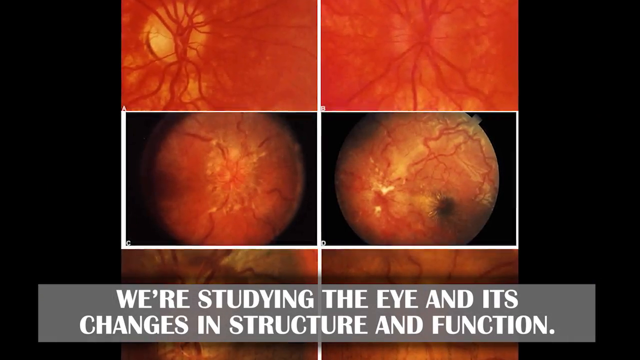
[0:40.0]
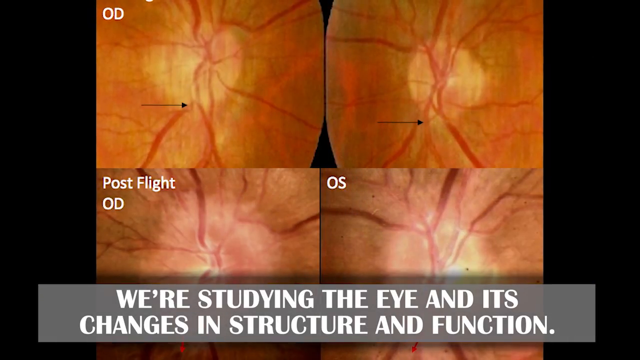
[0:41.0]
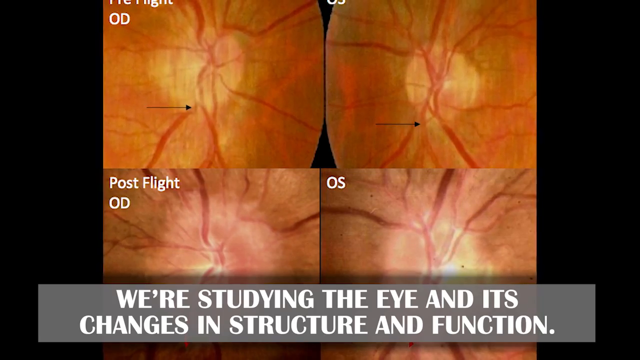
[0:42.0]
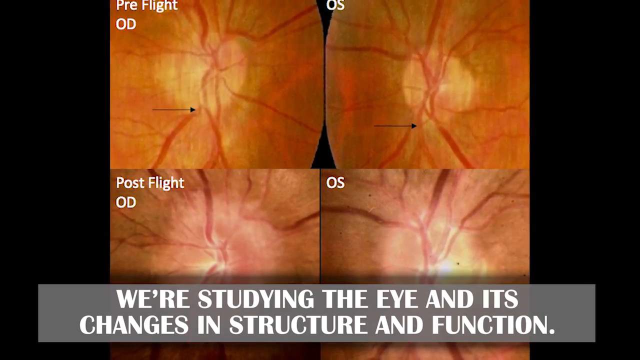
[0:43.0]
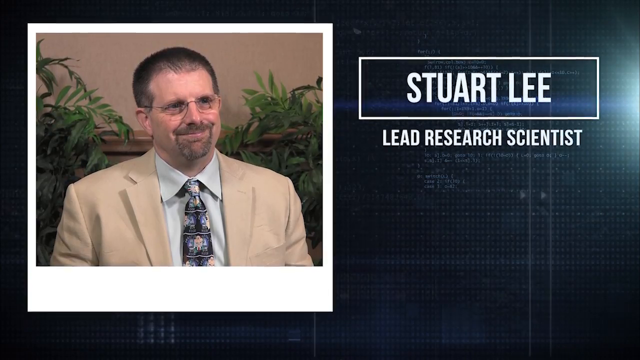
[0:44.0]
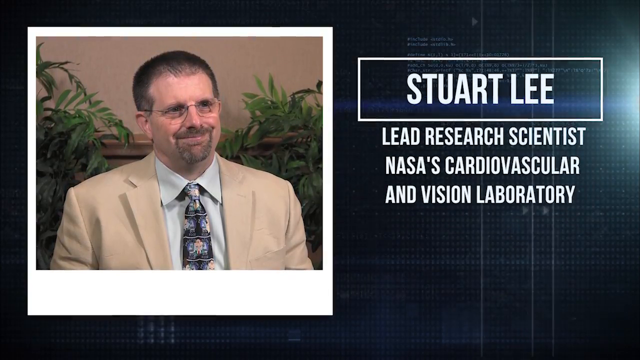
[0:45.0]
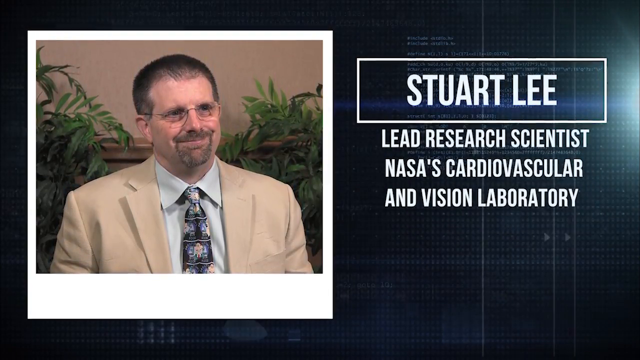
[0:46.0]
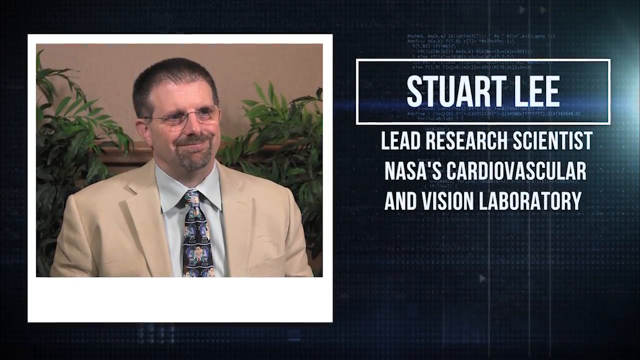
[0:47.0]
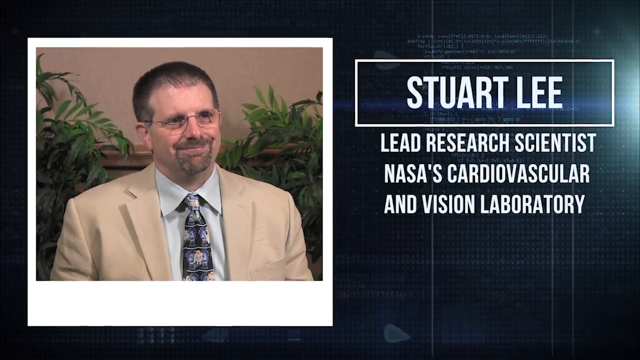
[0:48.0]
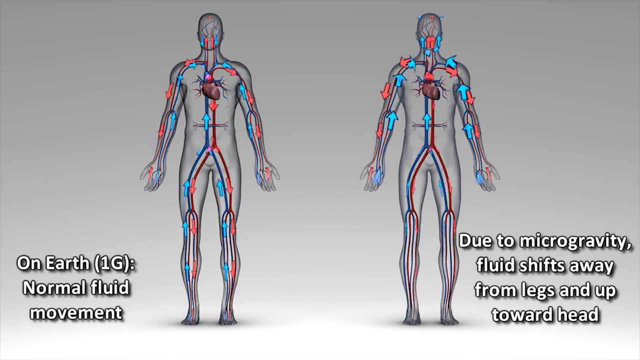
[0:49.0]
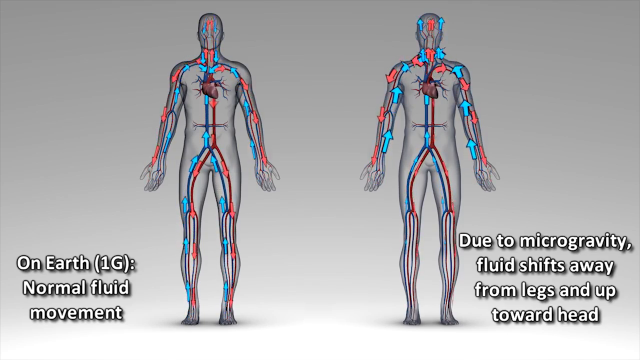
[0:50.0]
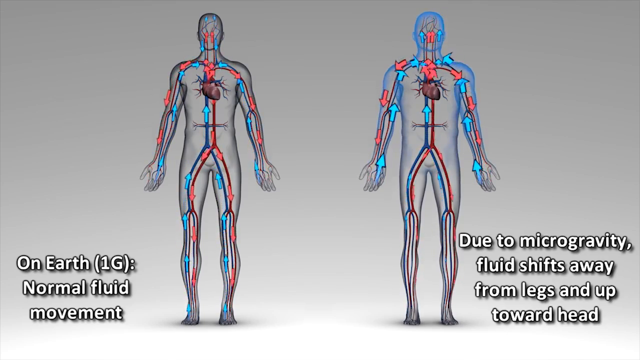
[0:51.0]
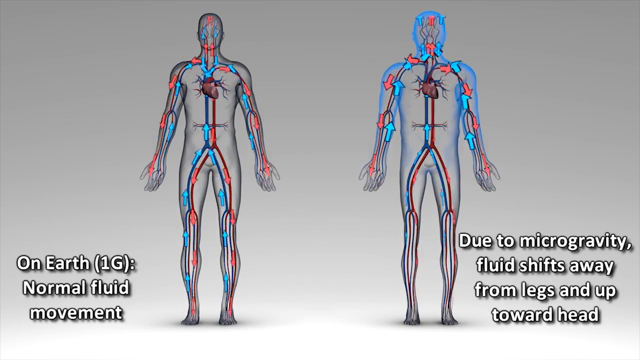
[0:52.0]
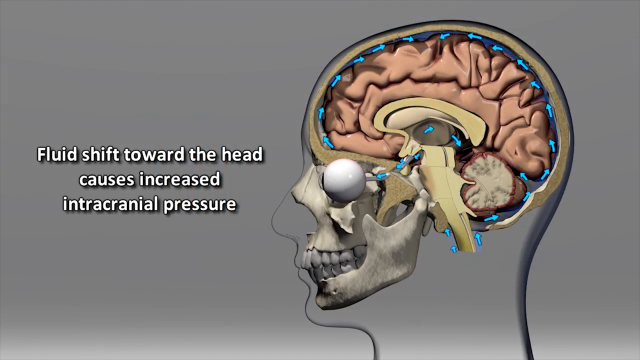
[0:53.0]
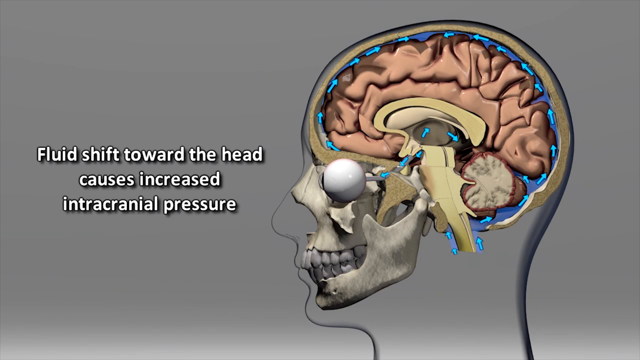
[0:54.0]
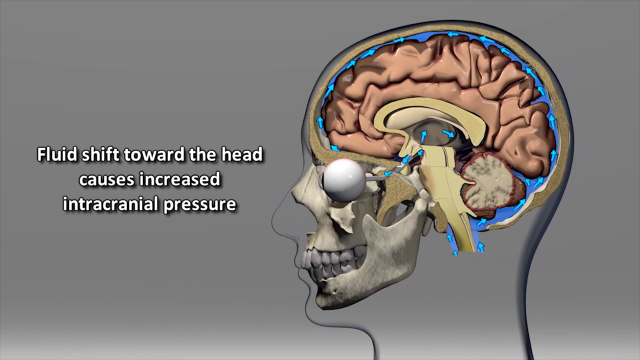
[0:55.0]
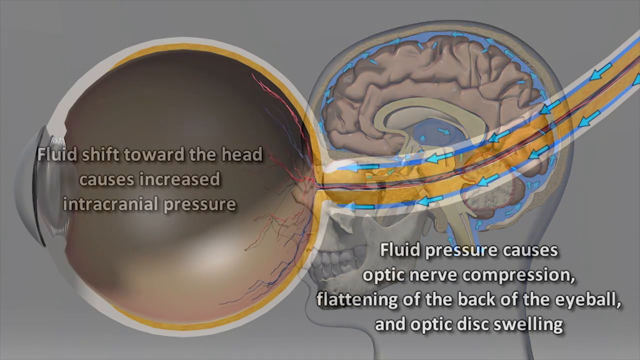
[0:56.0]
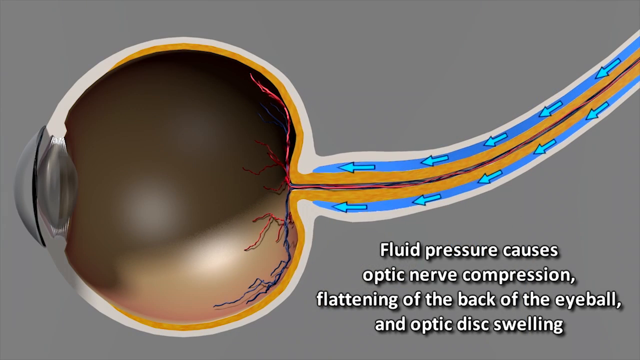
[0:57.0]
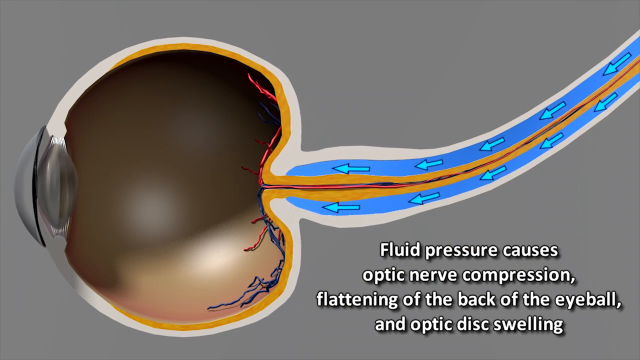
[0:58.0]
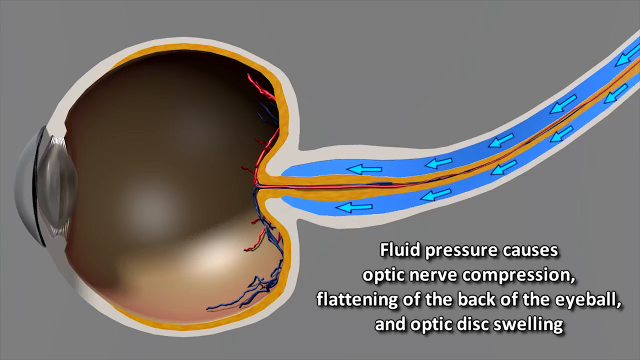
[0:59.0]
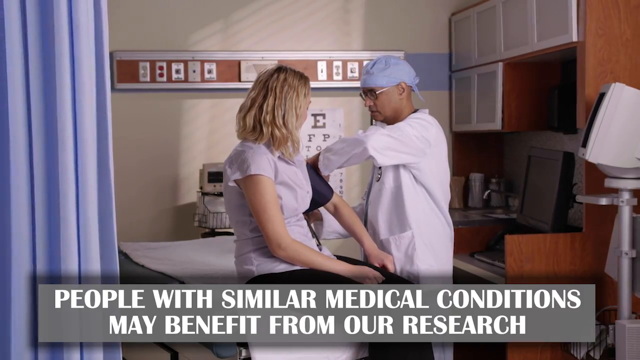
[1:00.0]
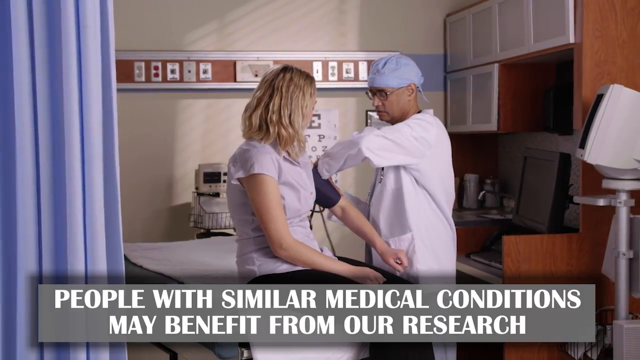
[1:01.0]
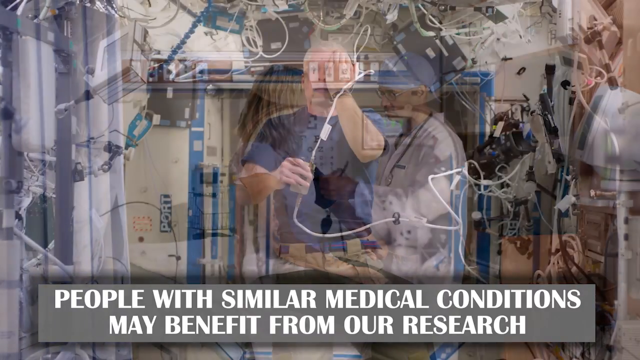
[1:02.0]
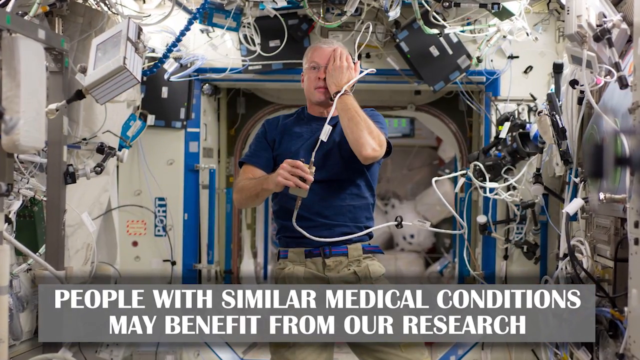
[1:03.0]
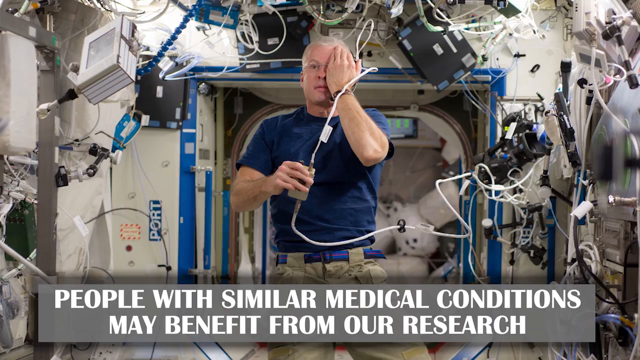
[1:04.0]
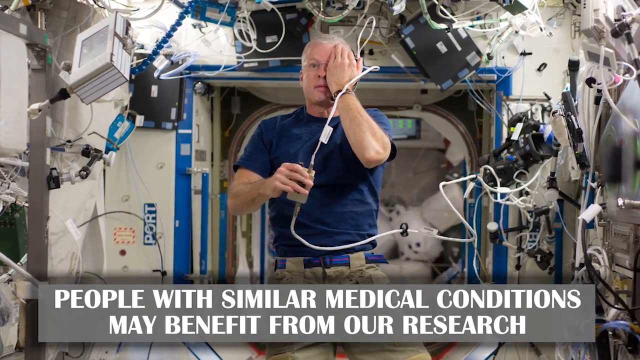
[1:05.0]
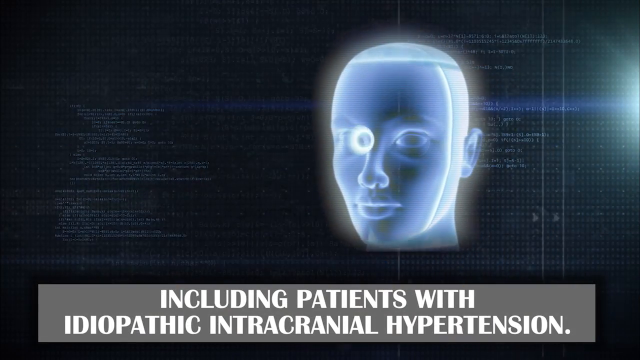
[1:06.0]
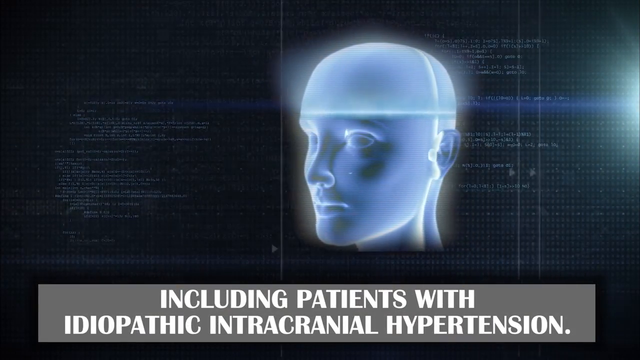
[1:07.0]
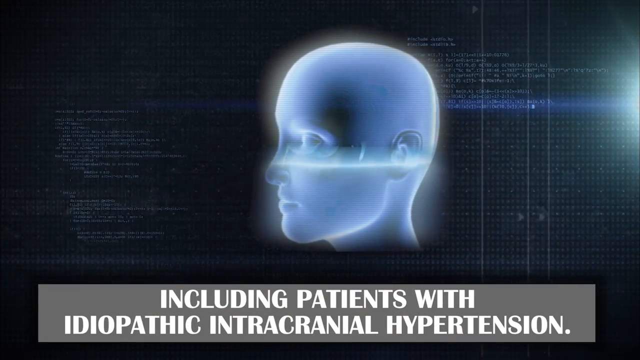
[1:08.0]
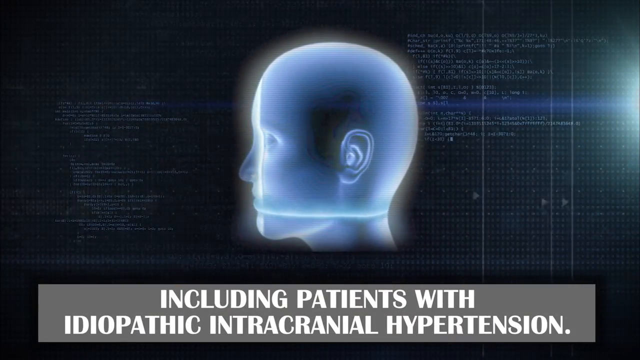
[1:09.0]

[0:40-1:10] Six pictures of the internal eye appear on a black screen, with text along the bottom reading "we're studying the eye and its changes in structure and function" in light gray, outlined by a darker gray text box. The image fades into a black screen with four images of the internal eye and the same text at the bottom. Next, on the left side of a black screen is a picture of a white man with glasses, short dark hair, a mustache and goatee, wearing a beige suit coat, a blue shirt and a multicolored tie. There is a plant on either side behind him, and his image is inside what looks like a Polaroid snapshot with a white frame. To the right the text reads "Stuart Lee, lead research scientist, NASA's Cardiovascular and Vision Library." The screen changes to two drawn human body figures with a red arrow and a blue arrow moving in opposite directions throughout the body, looking like veins but just an image. On the left, below the image, white text reads "on earth, 1G, normal fluid"; on the right, next to the right-hand figure, it reads "due to microgravity, fluid shifts away from legs and up toward head," with the arrows showing those flows. The image changes to an X-ray-like picture of a human head and skull showing the brain, with blue arrows circulating throughout the head on the right side of the screen; on the left the text reads "fluid shift toward the head causes increased intracranial pressure," on a gray background. Next is a side view of an eye, apparently its left side, showing the same flow coming from the cord through the back of the eye, depicted with a blue background and lighter blue arrows, on a gray background. Text on the right toward the bottom reads "fluid pressure causes optic nerve compression, flattening of the back of the eyeball, and optic disc swelling," and a graphic shows the swelling going into the eye. The scene changes to a woman sitting on a hospital bed getting a blood pressure cuff placed on her arm by a doctor in a white coat and a blue cap; they appear to be in a hospital. There is a blue curtain to the left of the woman, and cabinets and a little computer monitor to the right. Text along the bottom reads "people with similar medical conditions may benefit from our research." It fades into a man standing in the center of the frame, holding something over his left eye with his left hand and, in his right hand, the machine looking at his eye: a big white cord, which he holds by a beige box handle. Around him are a ton of wires, blue and white, and computer equipment hanging kind of from the ceiling on the sides of the image; it looks like they are at NASA. This fades into a static-y background with a glowing blue face-and-head graphic being scanned down the middle of the face with a light blue light. Gray text along the bottom, outlined by a darker gray text box, reads "including patients with idiopathic intracranial hypertension."